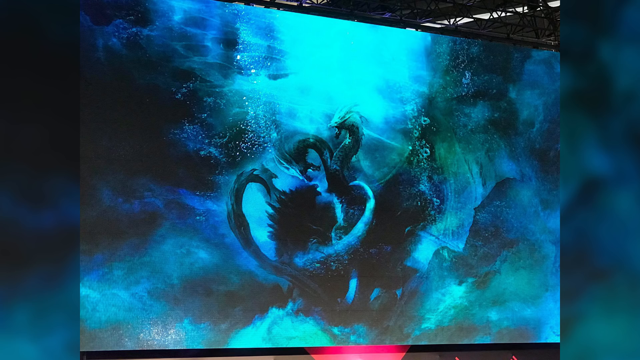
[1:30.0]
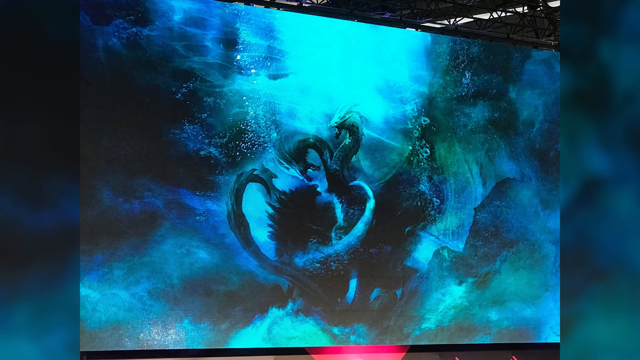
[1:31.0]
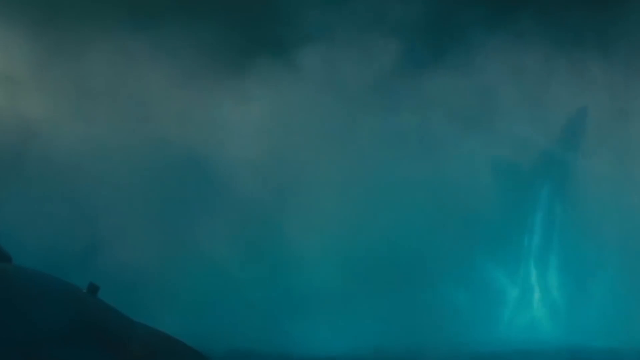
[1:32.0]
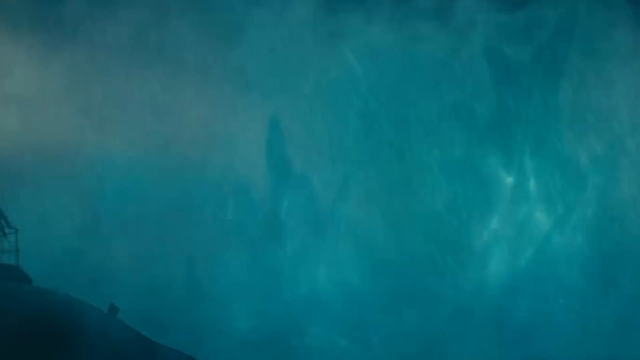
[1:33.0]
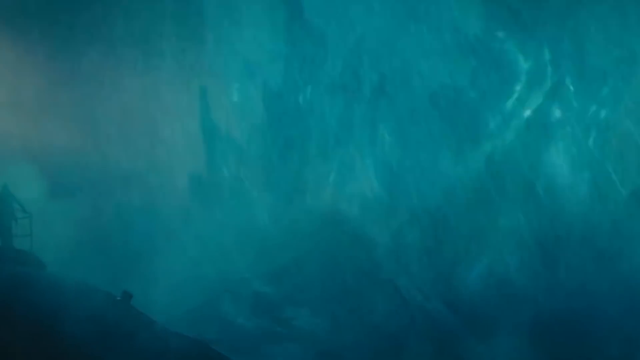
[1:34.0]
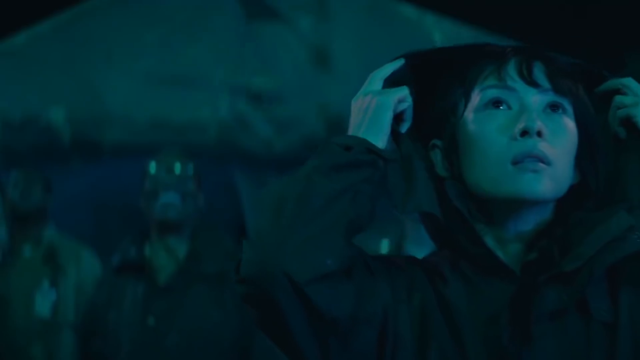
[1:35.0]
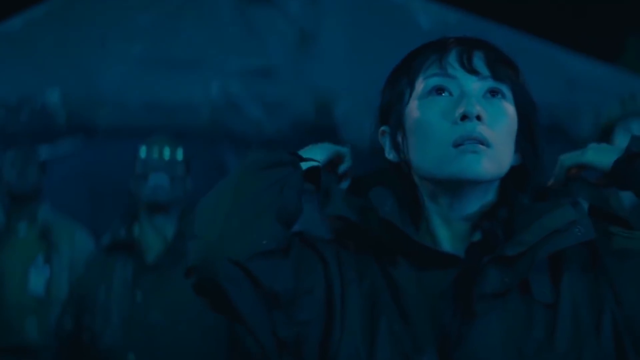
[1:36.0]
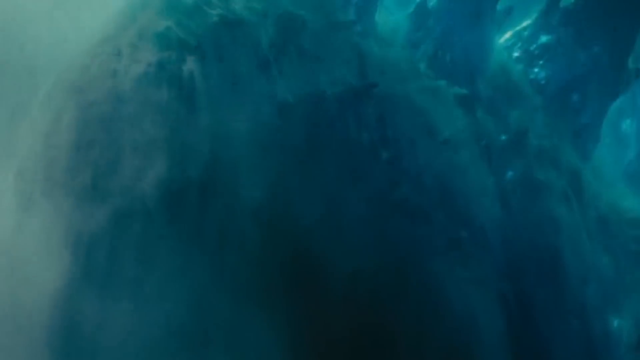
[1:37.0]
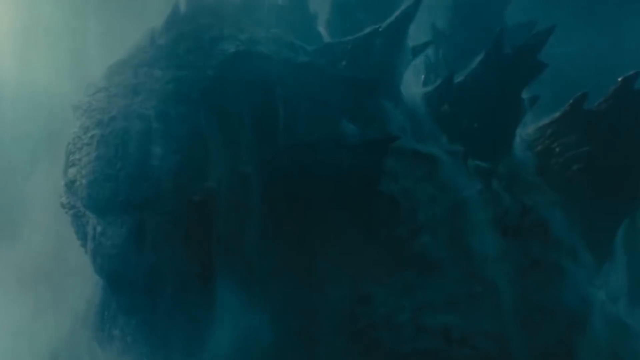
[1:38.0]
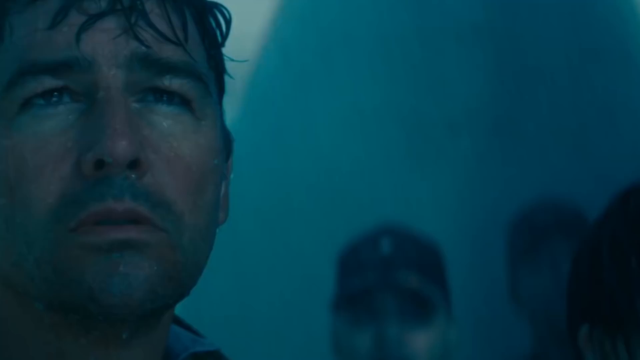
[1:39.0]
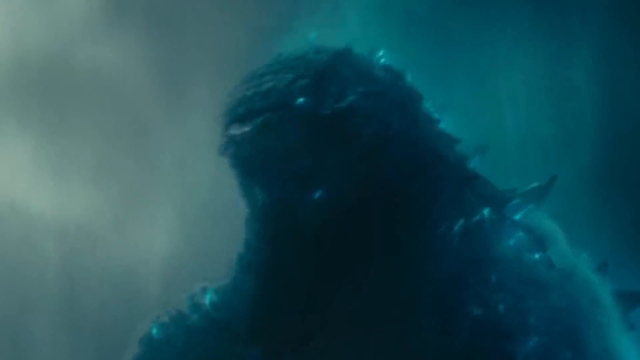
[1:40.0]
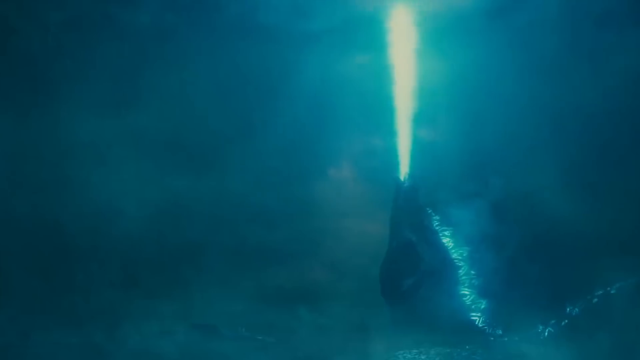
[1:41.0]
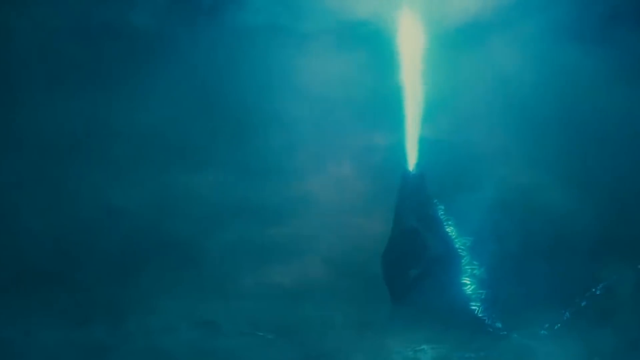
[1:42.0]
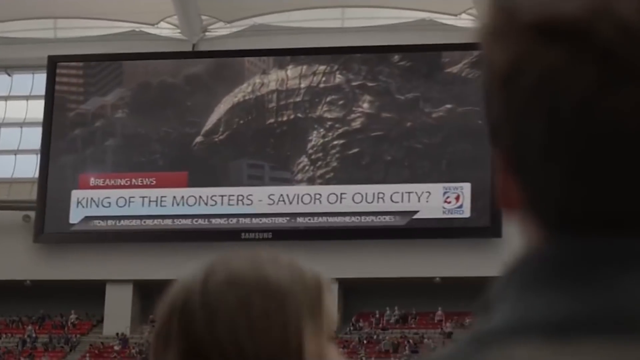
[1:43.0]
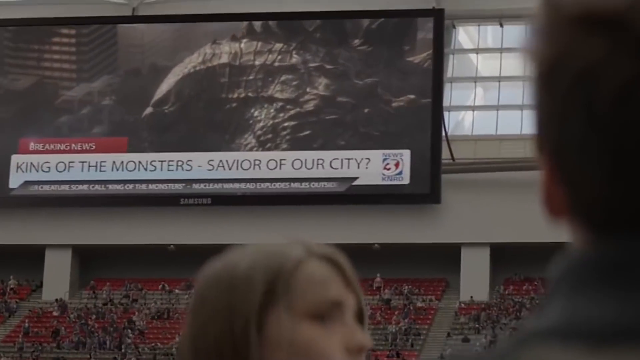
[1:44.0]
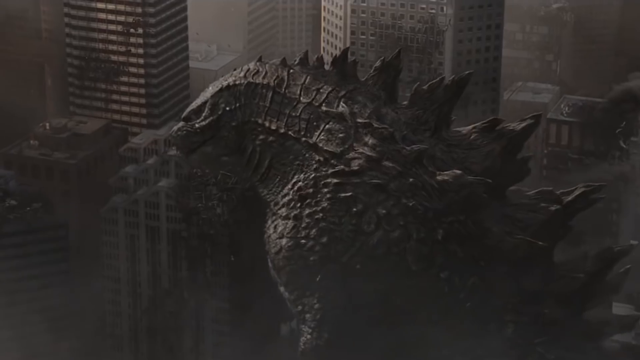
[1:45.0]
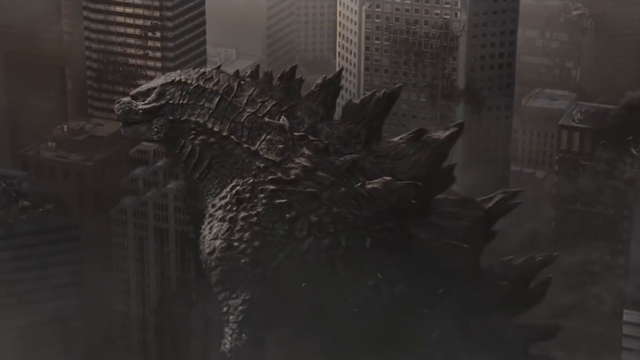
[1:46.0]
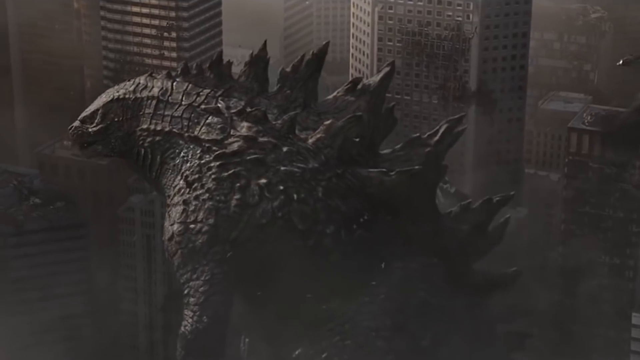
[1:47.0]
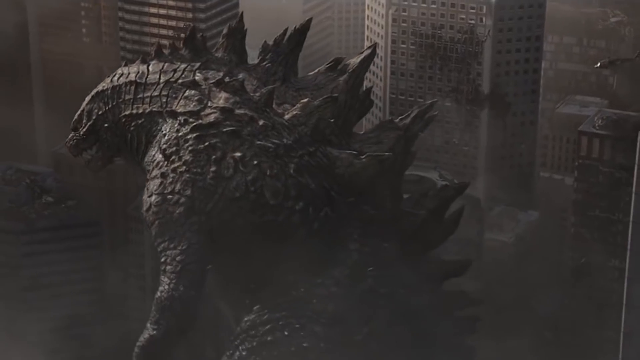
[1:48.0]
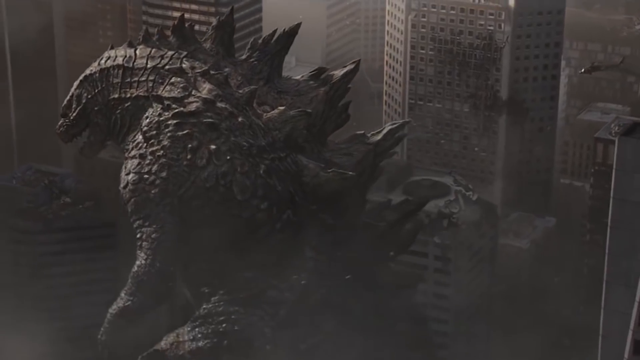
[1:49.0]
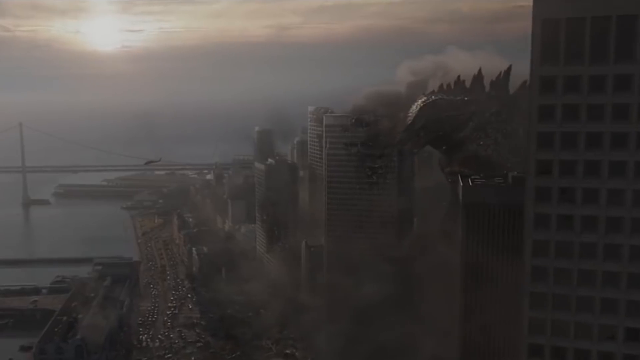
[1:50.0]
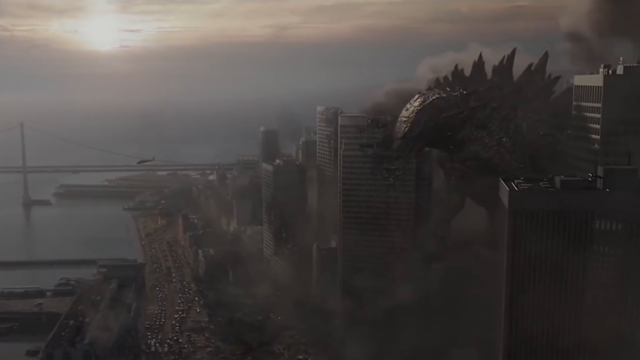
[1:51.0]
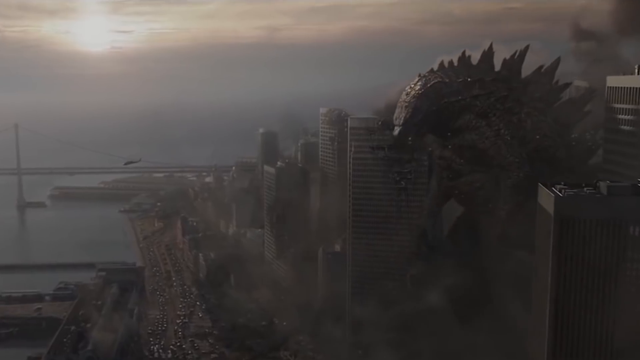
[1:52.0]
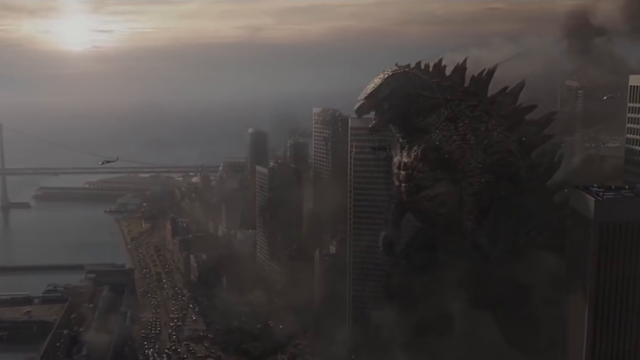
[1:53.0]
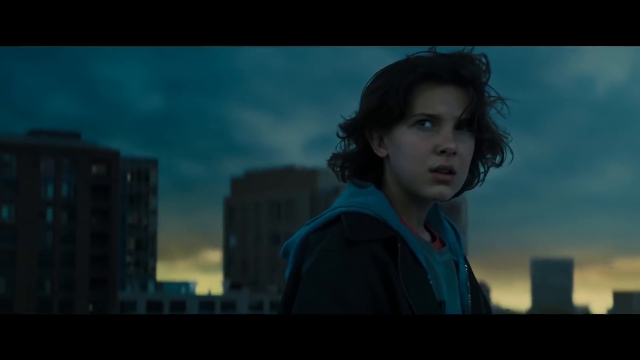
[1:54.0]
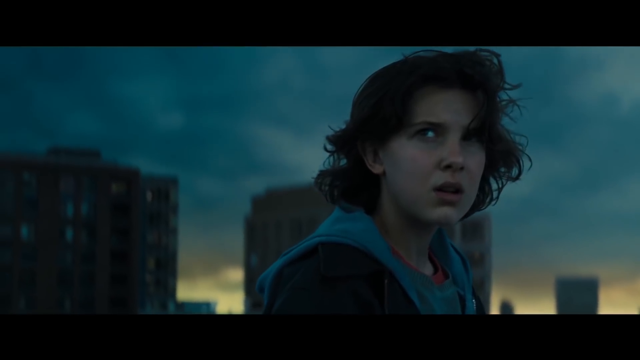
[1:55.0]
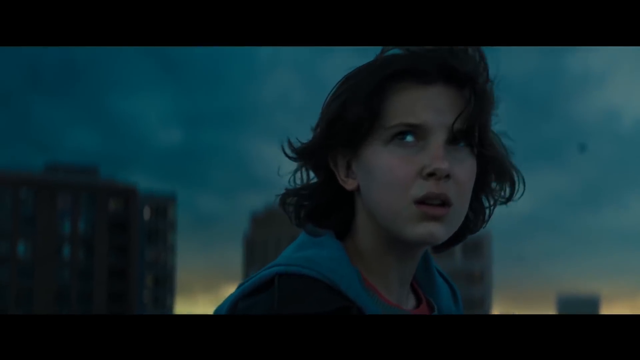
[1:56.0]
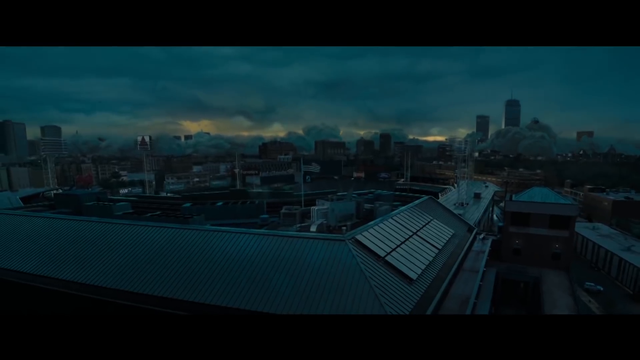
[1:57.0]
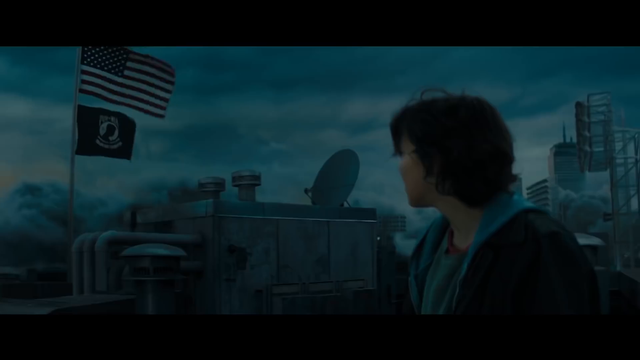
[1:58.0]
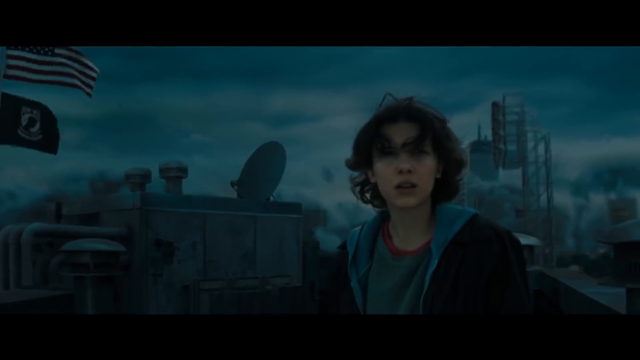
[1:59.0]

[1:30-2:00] A creature emerges from the water, with water dripping off its body and what look like spikes or mountain ranges on its back. The creature is scary and looks like Godzilla. It opens its mouth and a blue beam of light comes out. People who look Korean observe it; they look scared and are wet, with water falling on them like rain. A TV or screen then shows Godzilla walking through the city and destroying buildings, with the text "King of the monsters, savior of our city?" at the bottom. The screen is black and mounted on a white wall in a building that looks like a sports venue with many red chairs. On the screen, the city looks like a war zone: buildings are destroyed, cars rush along the road, a helicopter flies, and the sun is setting. A white woman with long black hair wearing a blue hoodie is on a rooftop. A rooftop view of the city follows. Then the video goes back to the boy, and an American flag is visible on top of a building.